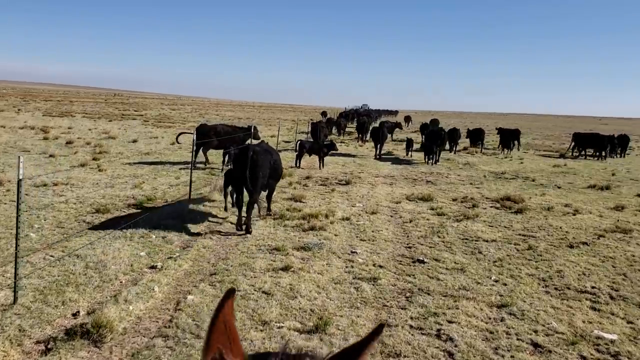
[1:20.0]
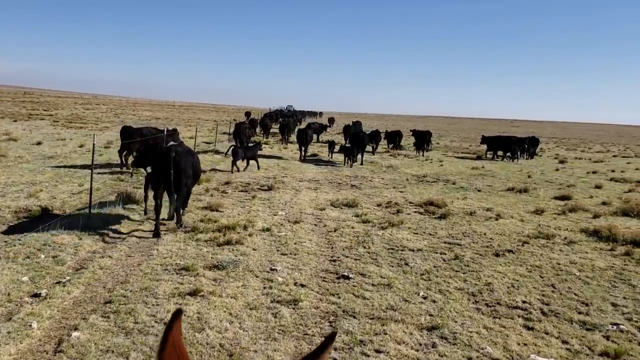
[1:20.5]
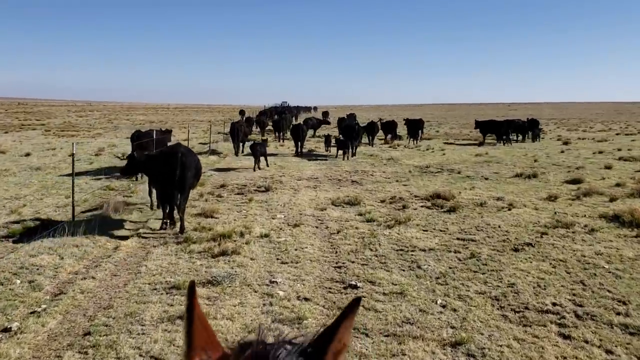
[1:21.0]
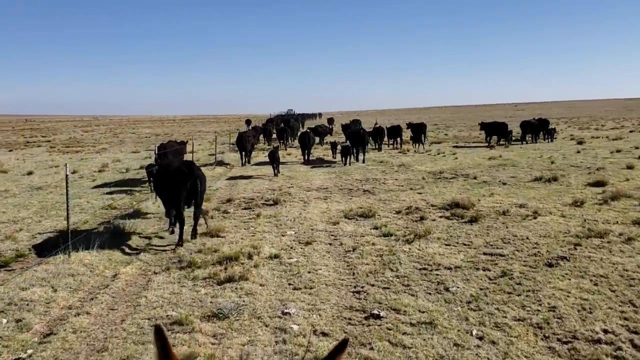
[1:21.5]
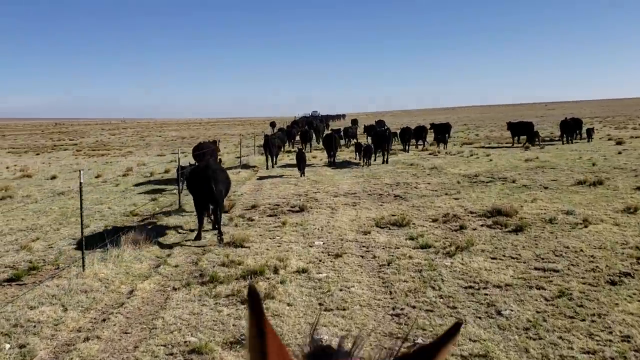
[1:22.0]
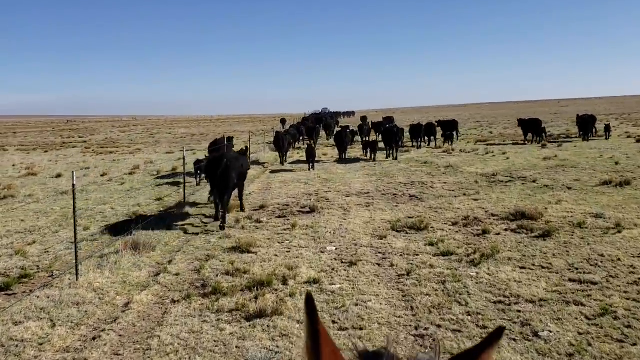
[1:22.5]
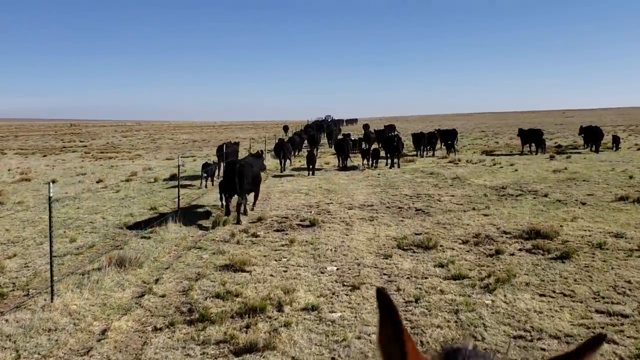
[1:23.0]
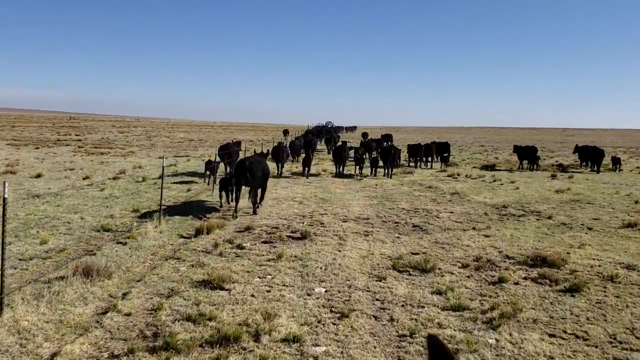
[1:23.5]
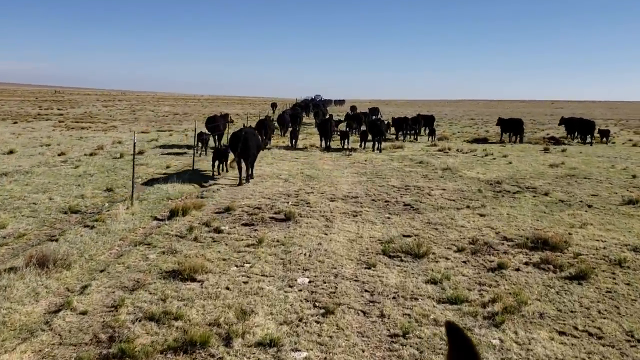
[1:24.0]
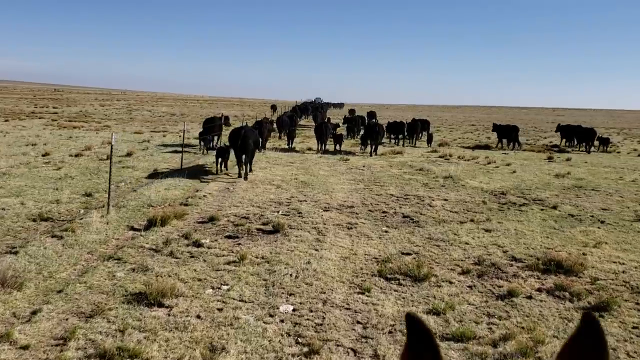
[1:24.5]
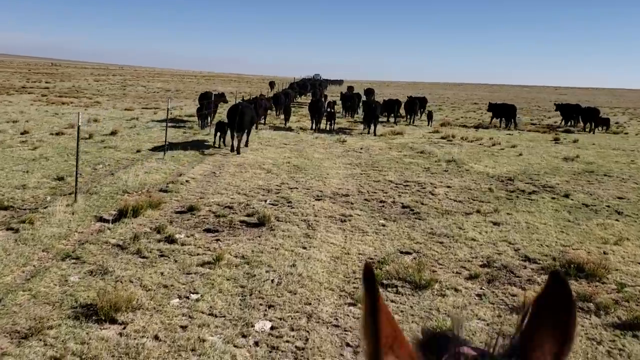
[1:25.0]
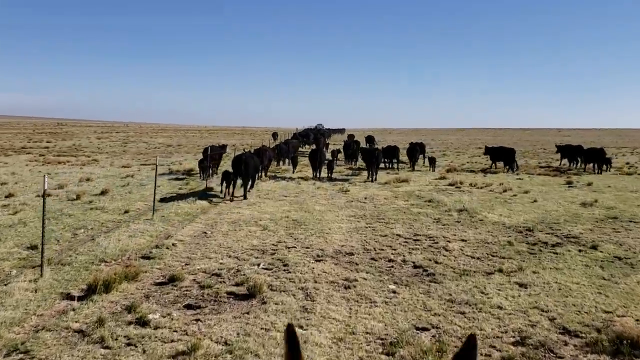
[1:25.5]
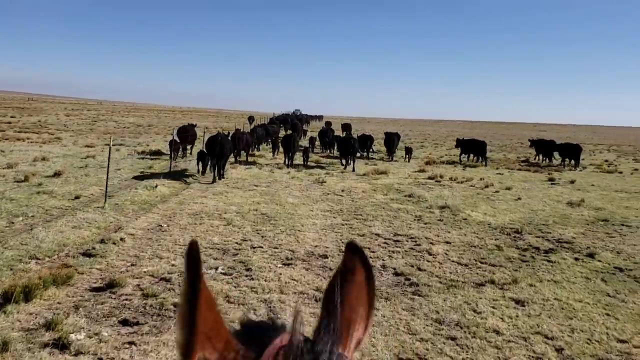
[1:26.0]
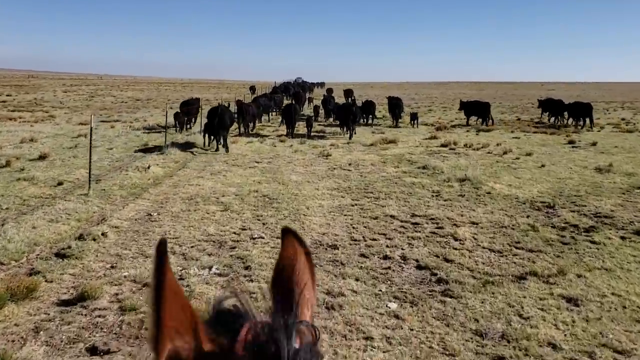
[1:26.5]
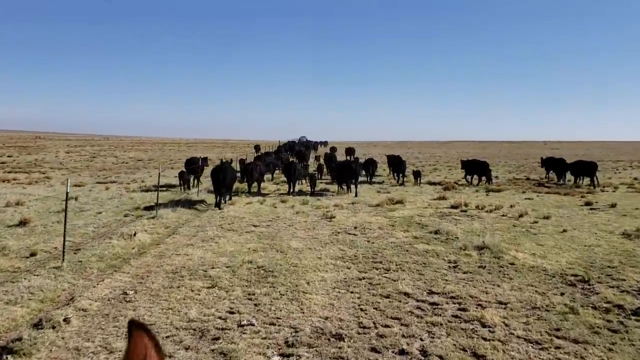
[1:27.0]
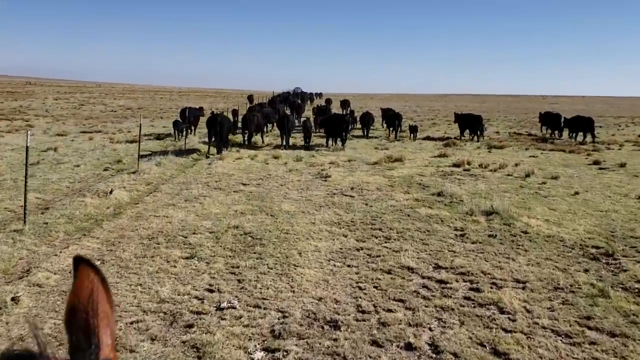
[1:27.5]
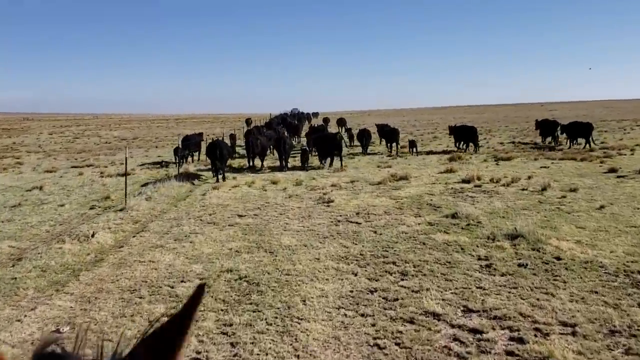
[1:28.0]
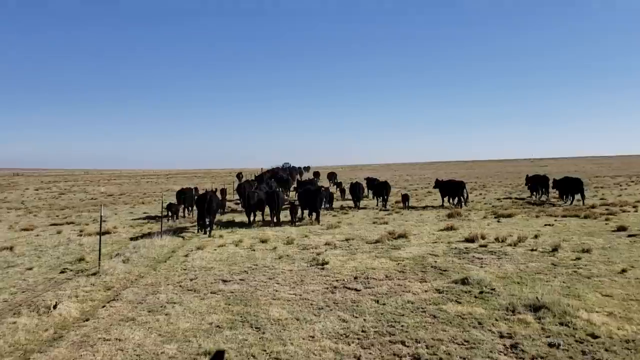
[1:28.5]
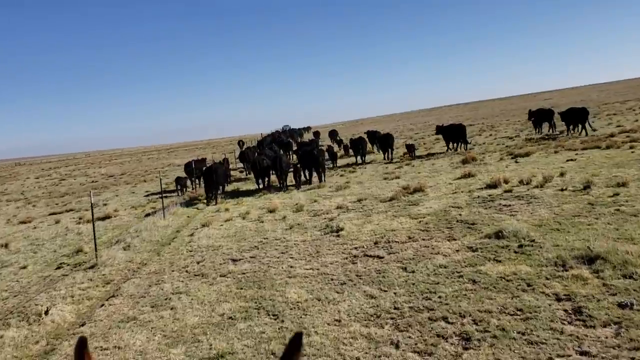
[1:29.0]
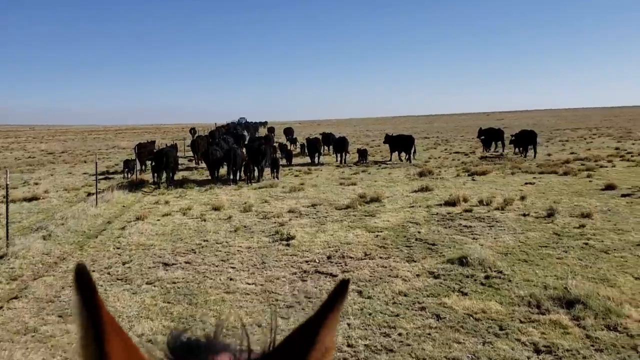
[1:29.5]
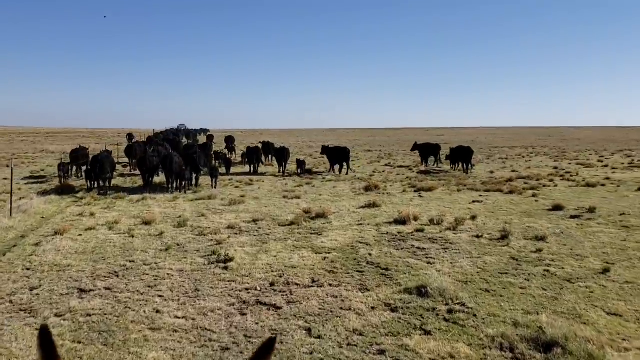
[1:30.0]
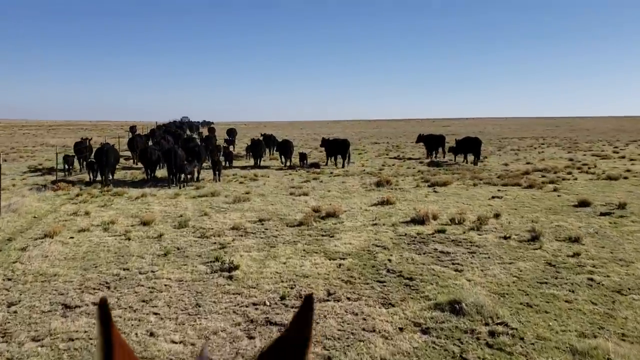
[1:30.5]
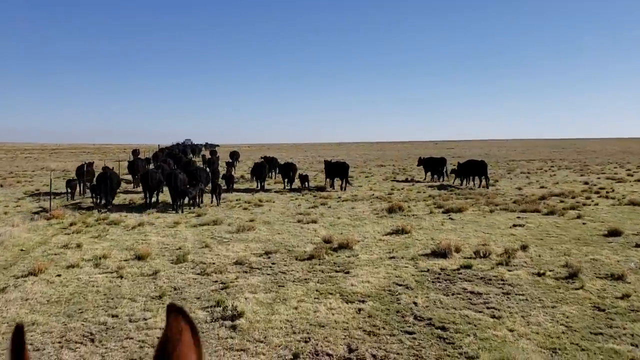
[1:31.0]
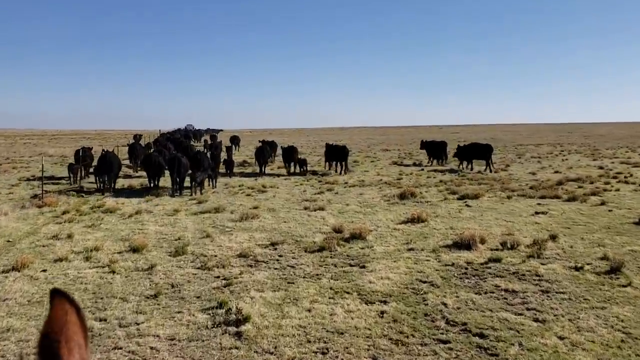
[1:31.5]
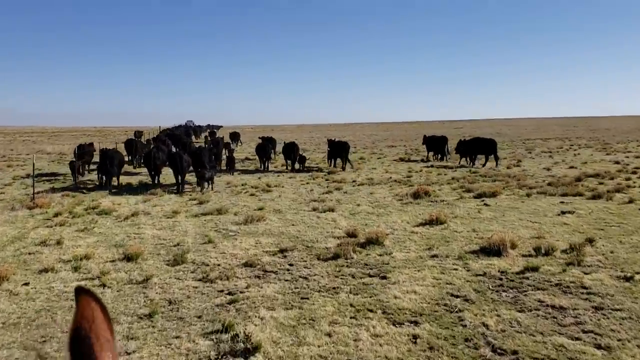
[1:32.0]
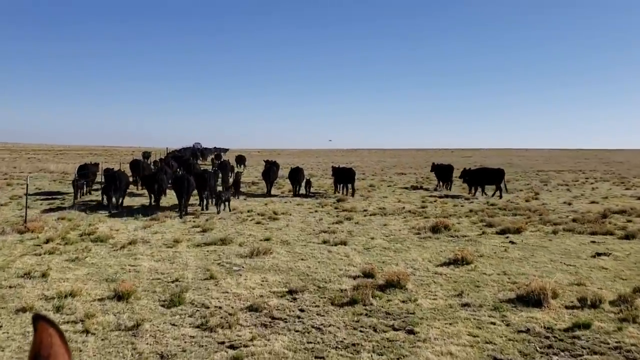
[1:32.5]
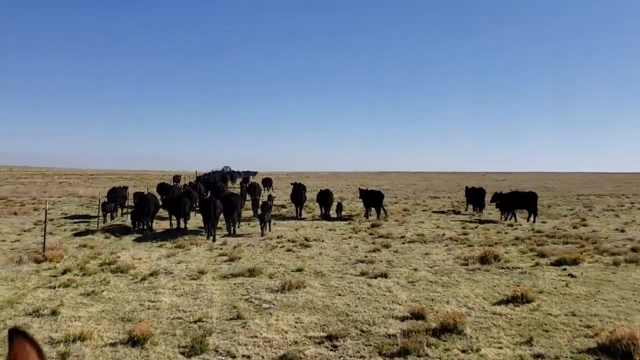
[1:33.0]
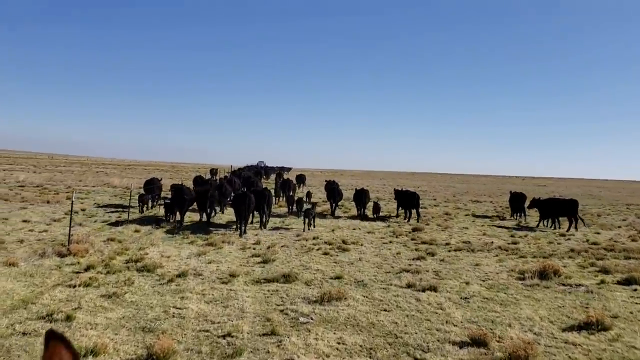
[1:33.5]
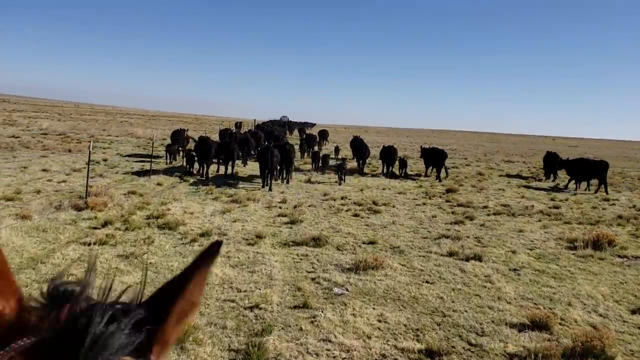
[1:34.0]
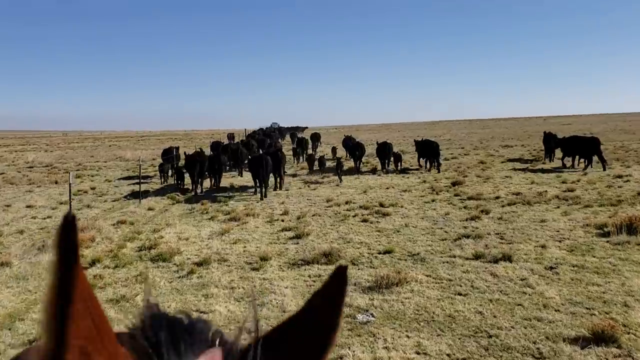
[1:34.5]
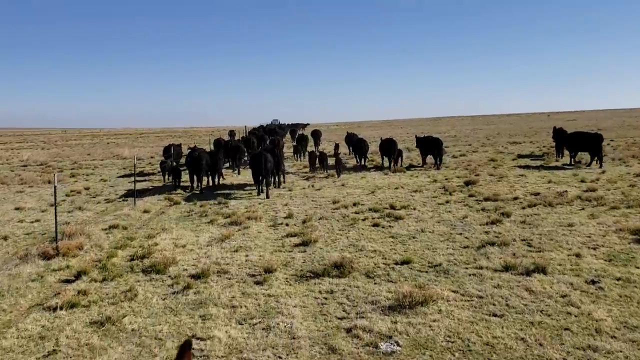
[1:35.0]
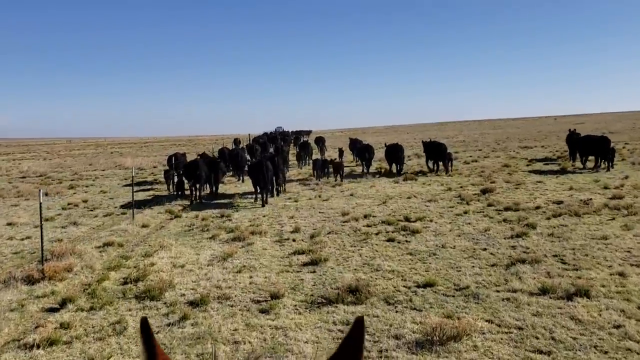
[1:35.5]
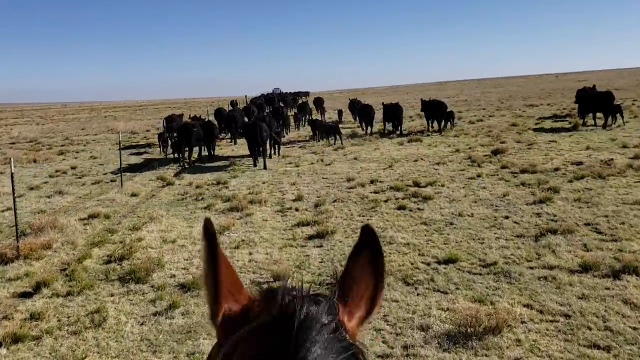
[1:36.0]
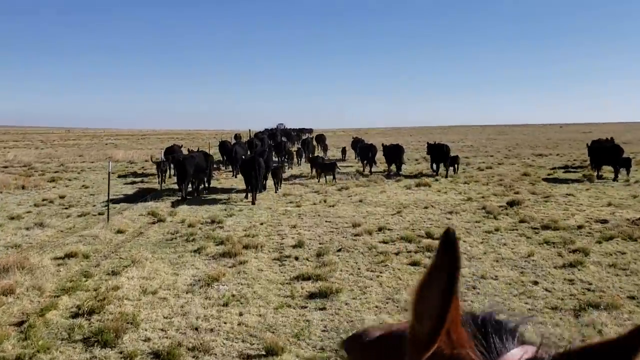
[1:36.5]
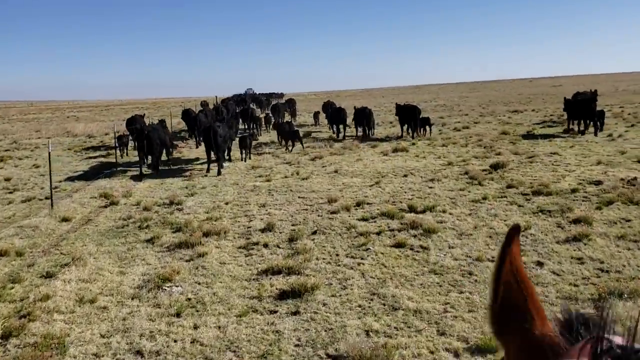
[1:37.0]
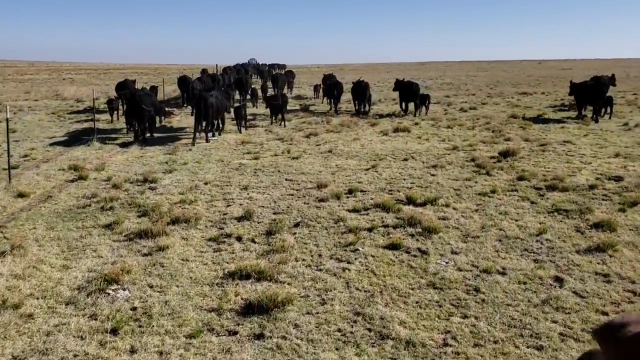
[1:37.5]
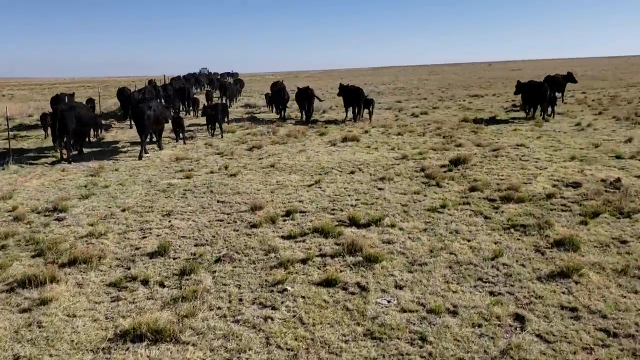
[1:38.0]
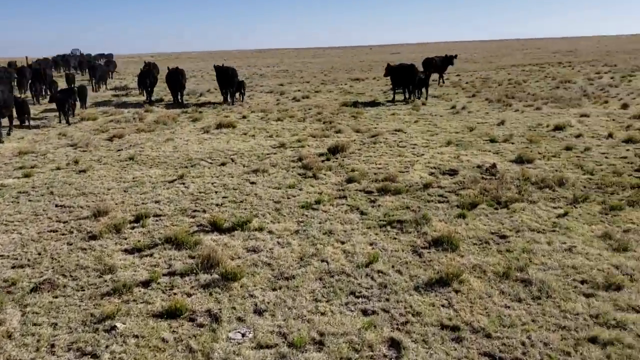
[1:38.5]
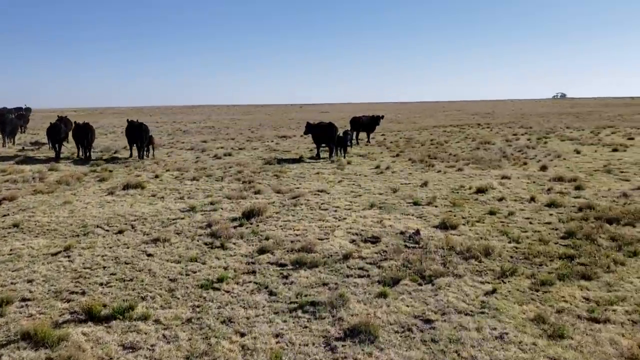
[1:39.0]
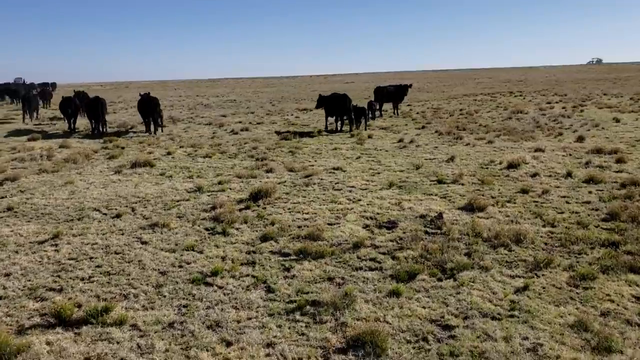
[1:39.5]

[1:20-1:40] The herd slows down and moves less quickly than before, then walks. The group stays in a tight formation without scattering, while another herd is far ahead. The horse is also walking. The rancher moves to the right because four cattle have sort of strayed from the group, apparently trying to push them back to the middle. At first the stragglers look like they will return to the group, but they keep moving right, so the rancher turns right to force the four back toward the main group.